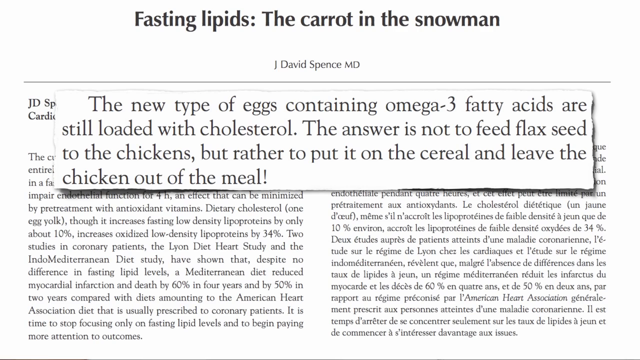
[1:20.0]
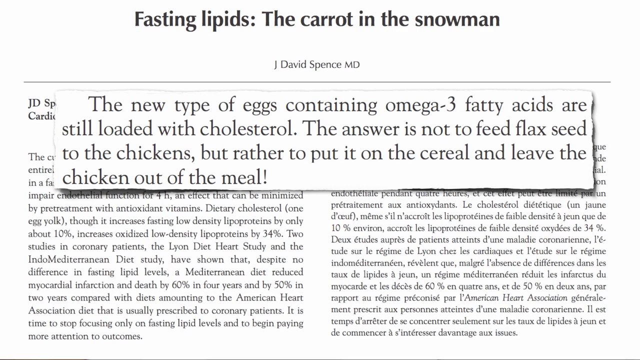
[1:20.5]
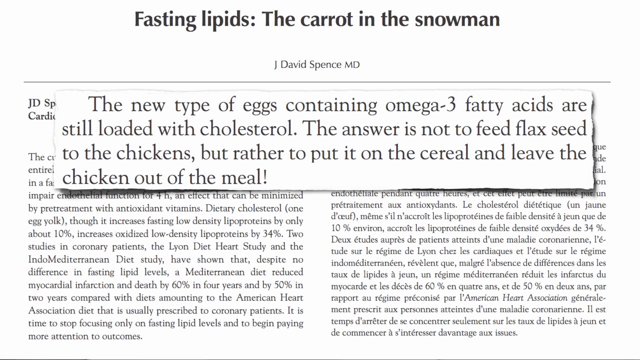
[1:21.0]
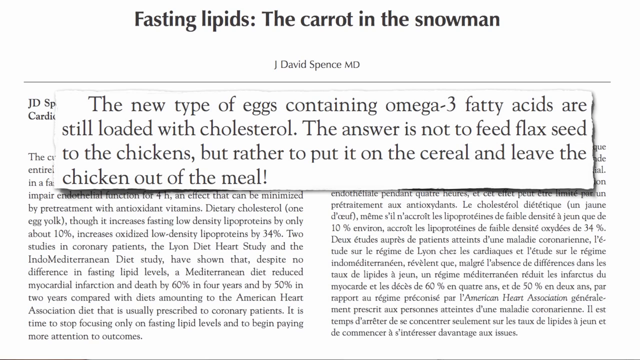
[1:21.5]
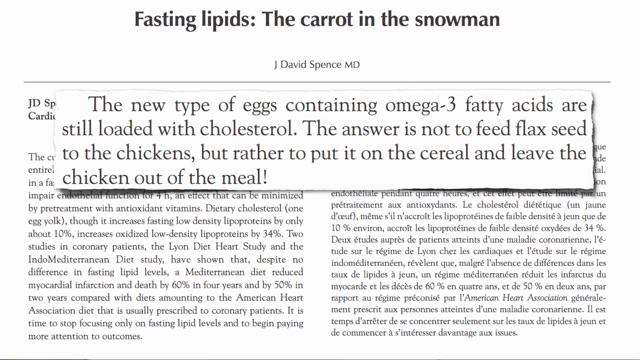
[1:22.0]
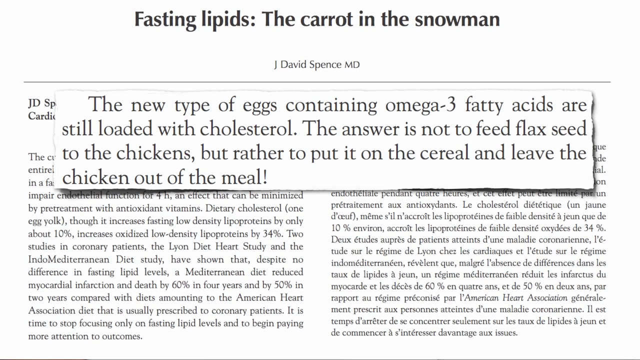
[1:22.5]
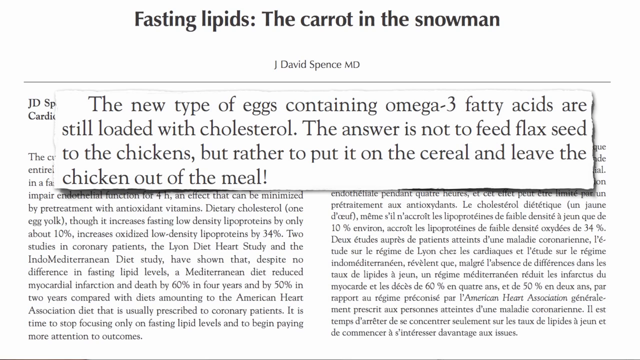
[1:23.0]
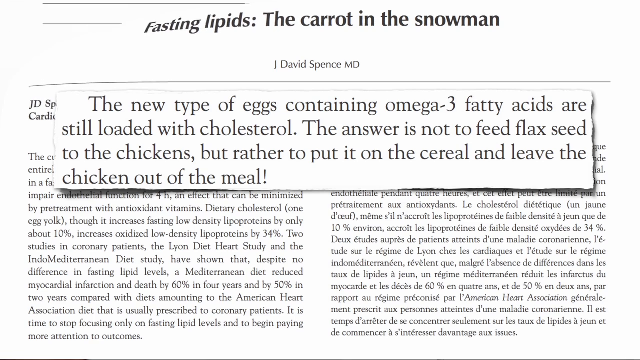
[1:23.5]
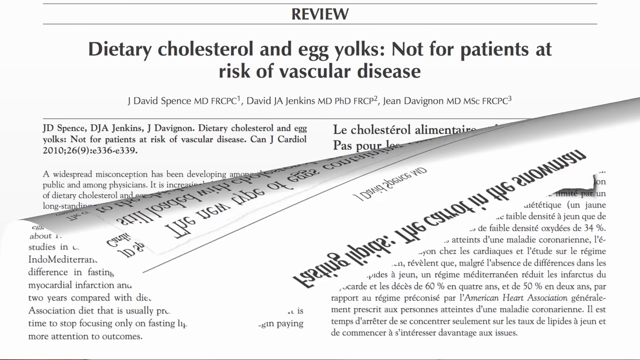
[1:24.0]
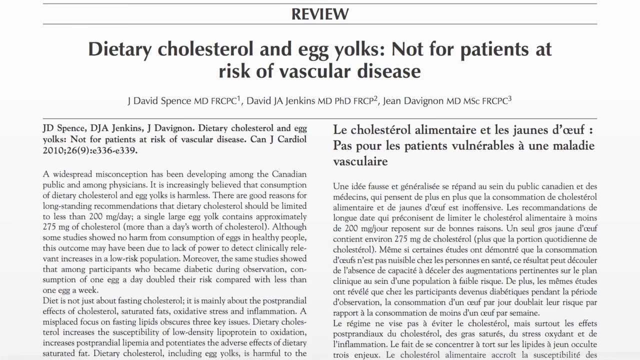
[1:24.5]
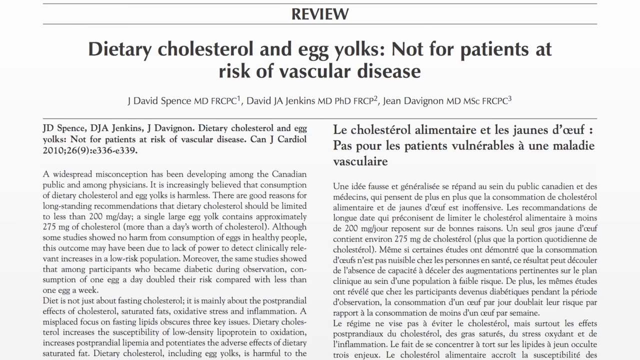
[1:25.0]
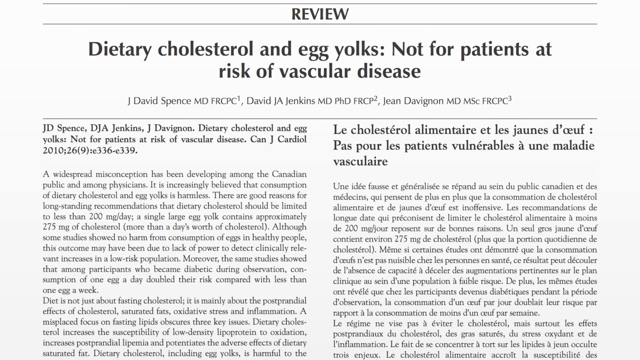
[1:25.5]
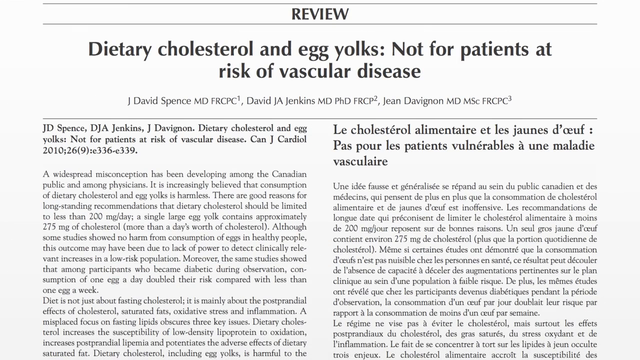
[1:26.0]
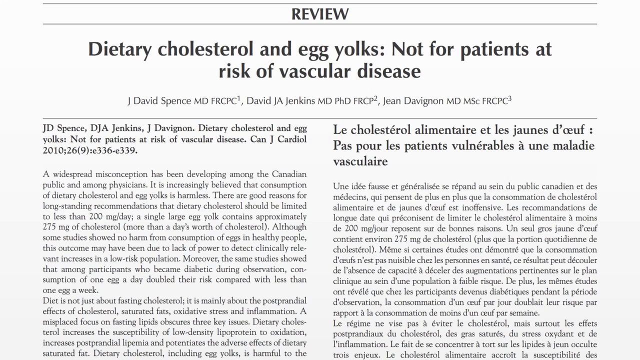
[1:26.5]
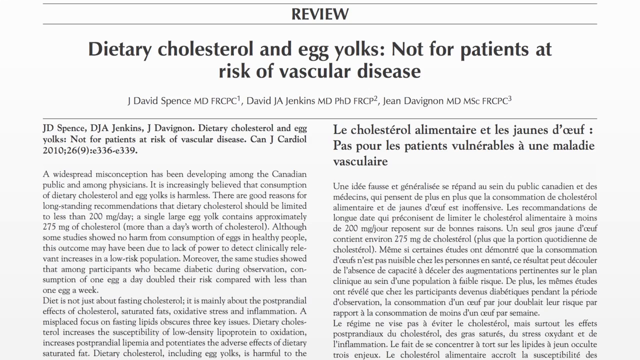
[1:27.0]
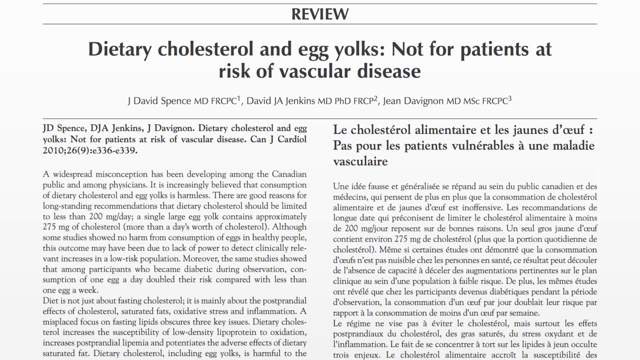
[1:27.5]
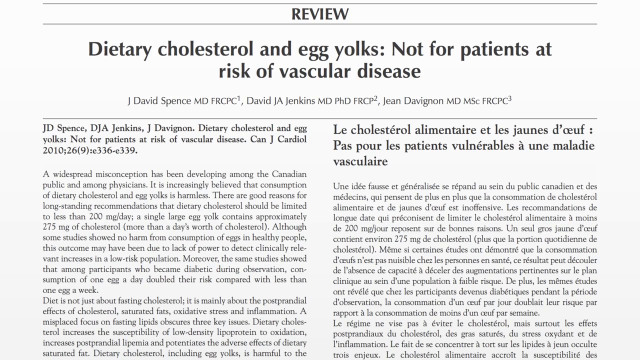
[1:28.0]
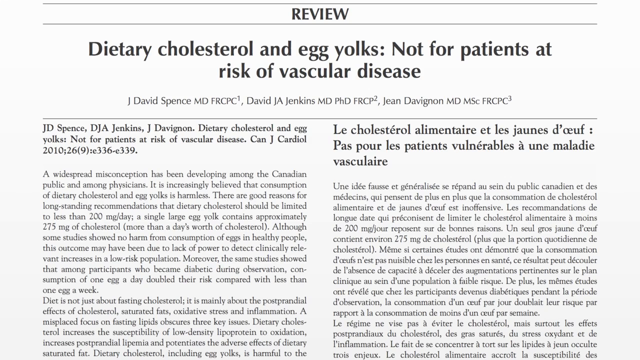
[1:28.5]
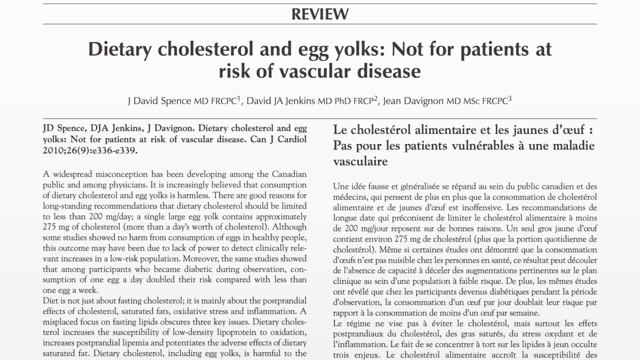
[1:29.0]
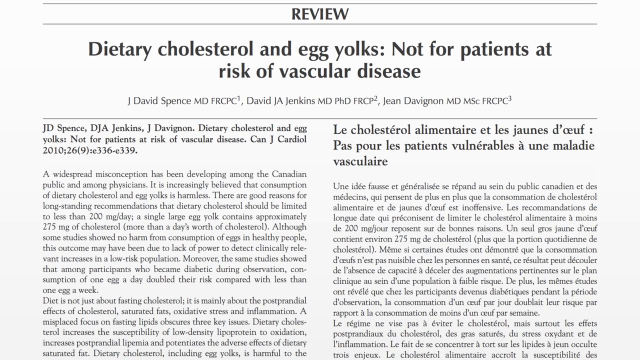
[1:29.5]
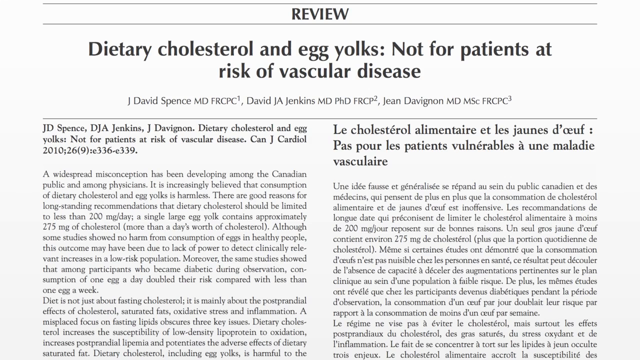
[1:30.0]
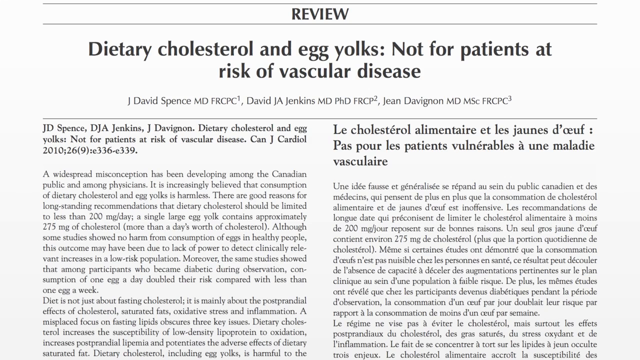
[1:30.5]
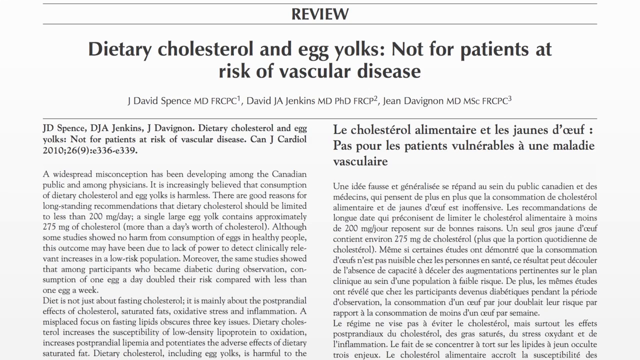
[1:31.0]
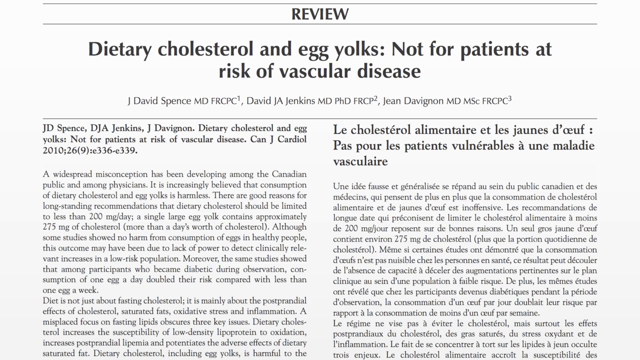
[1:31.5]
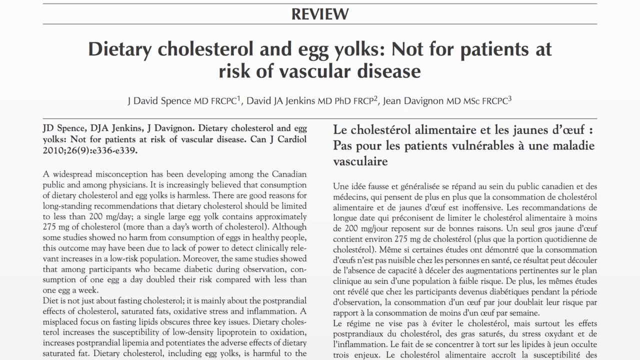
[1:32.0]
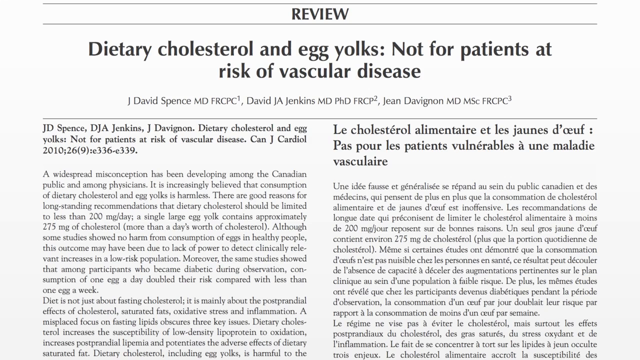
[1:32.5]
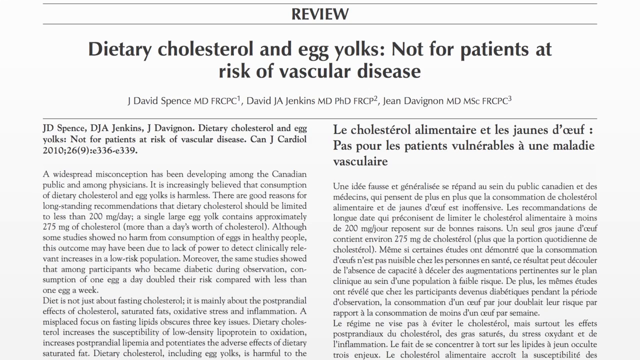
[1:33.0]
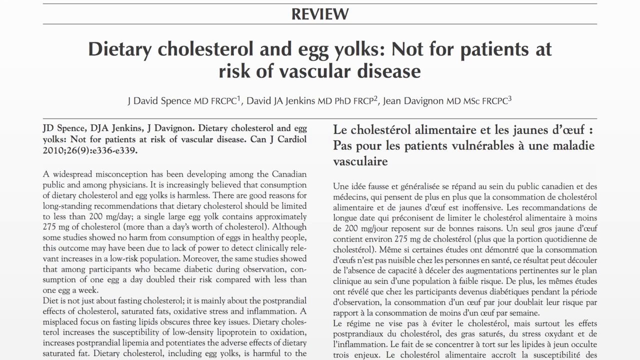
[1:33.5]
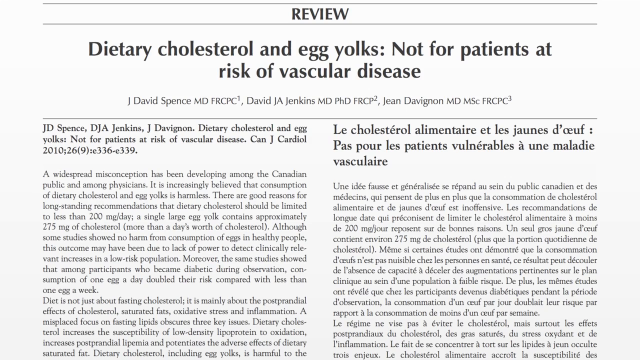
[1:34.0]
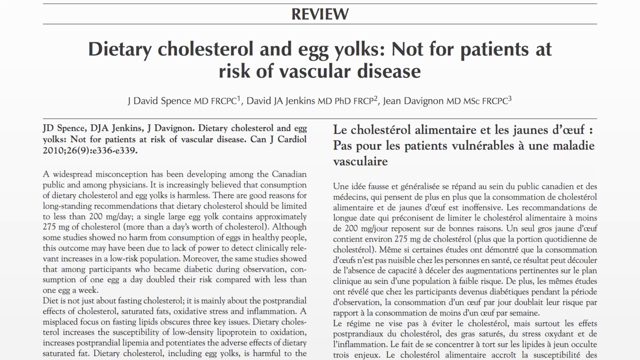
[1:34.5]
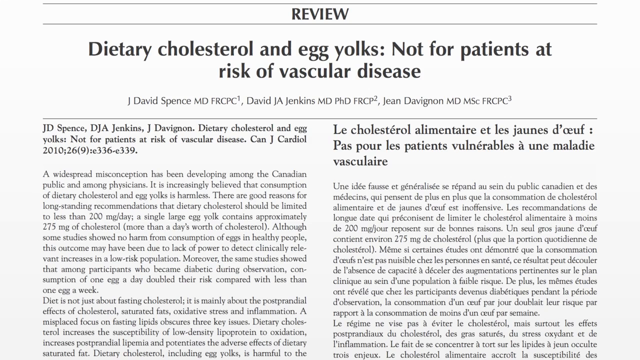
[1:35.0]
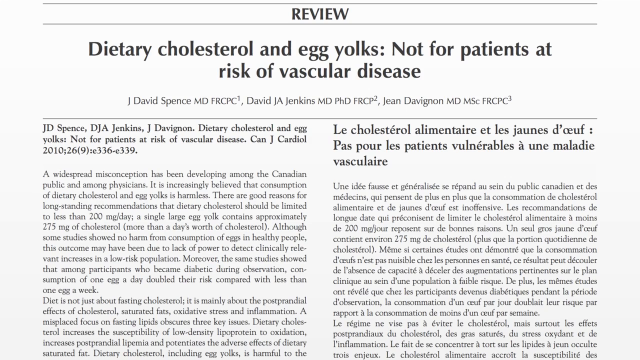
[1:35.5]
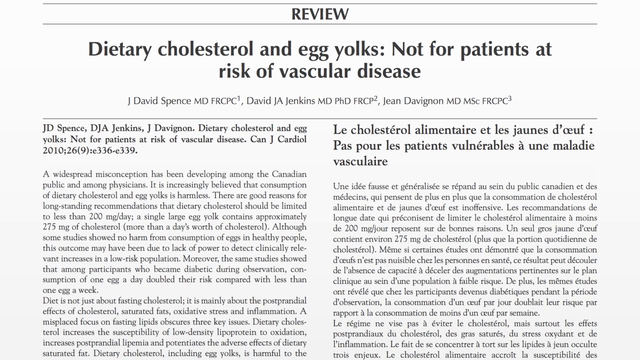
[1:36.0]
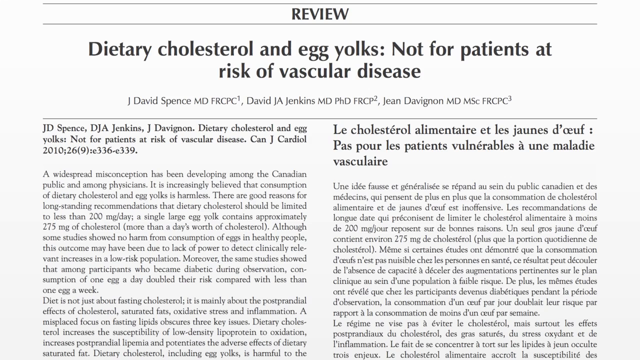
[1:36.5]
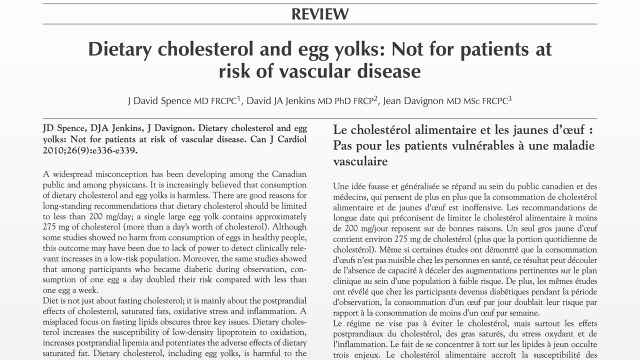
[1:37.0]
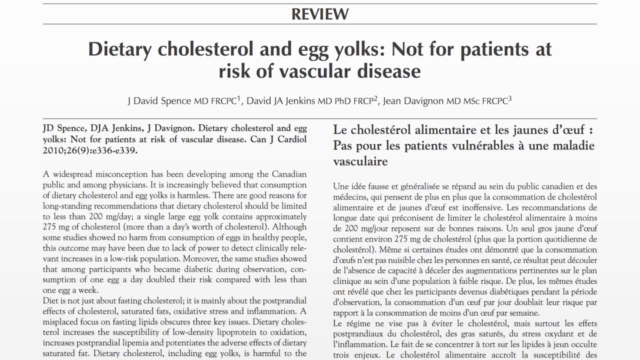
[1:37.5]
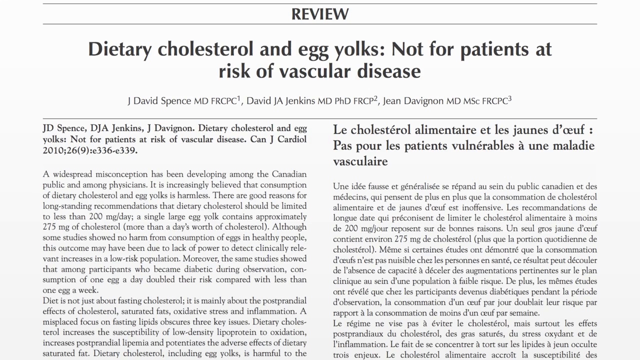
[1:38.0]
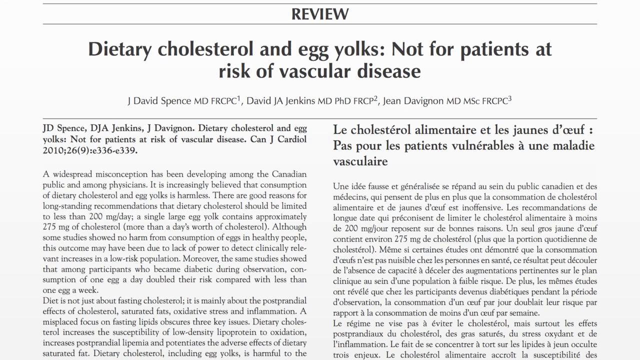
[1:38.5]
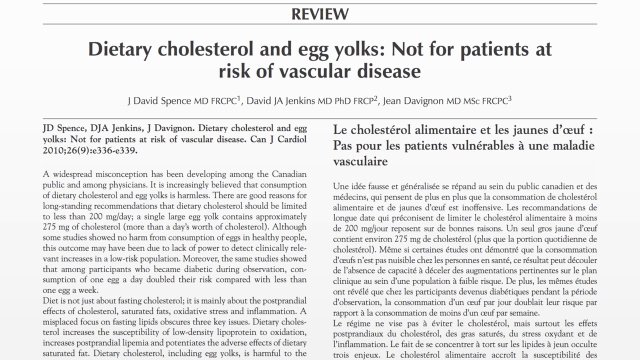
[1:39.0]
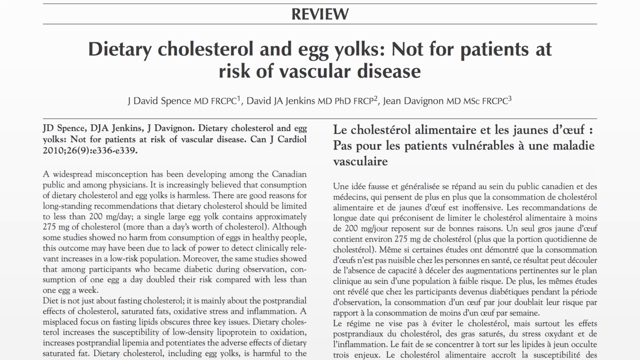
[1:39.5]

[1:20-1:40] The journal article with the overlapping white rectangle of text is on screen. A page-turning effect then moves from the top to the bottom of the page, with the top layer of paper pulled downward from the left-hand corner, revealing the next page, another journal article, underneath. Its title reads "review dietary cholesterol and egg yolks not for patients at risk of vascular disease", and it is accompanied by two columns of text. The view lingers on this review for several seconds. The left-hand column of the article is in English, and the right-hand column is the same article written in French, so both versions sit side by side.